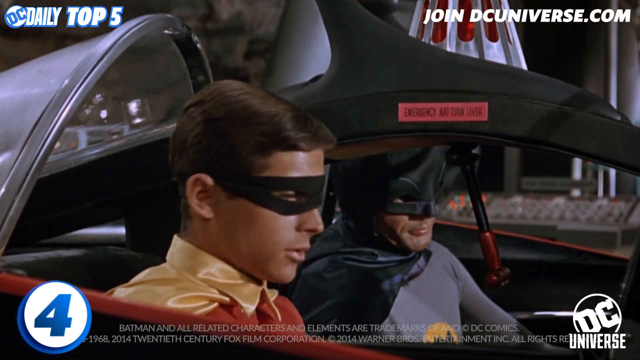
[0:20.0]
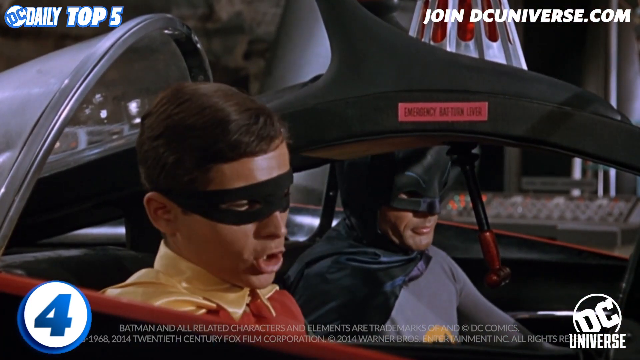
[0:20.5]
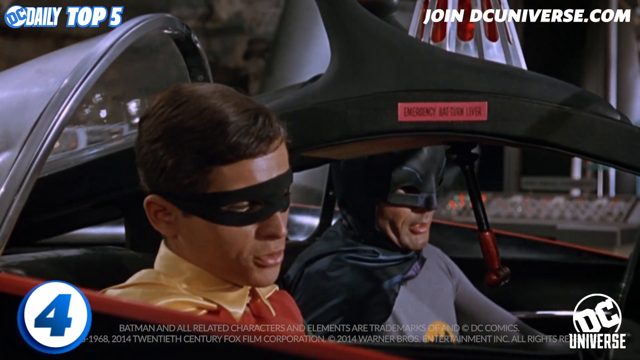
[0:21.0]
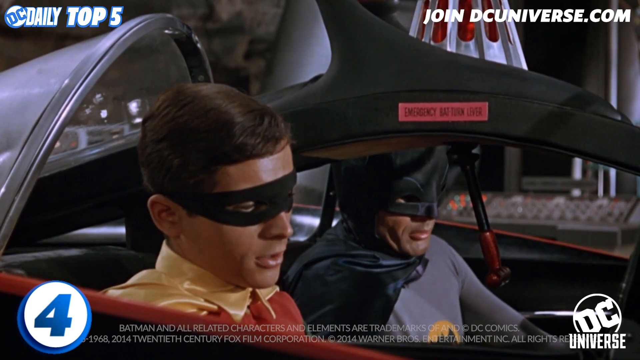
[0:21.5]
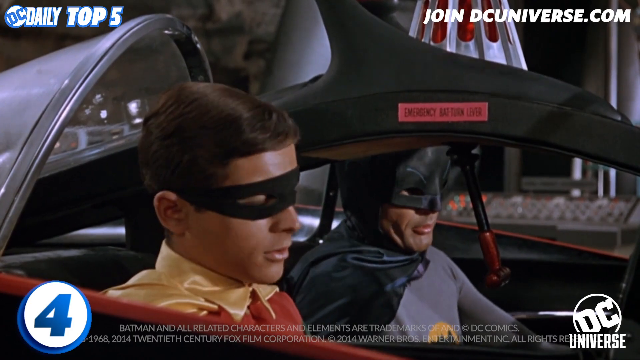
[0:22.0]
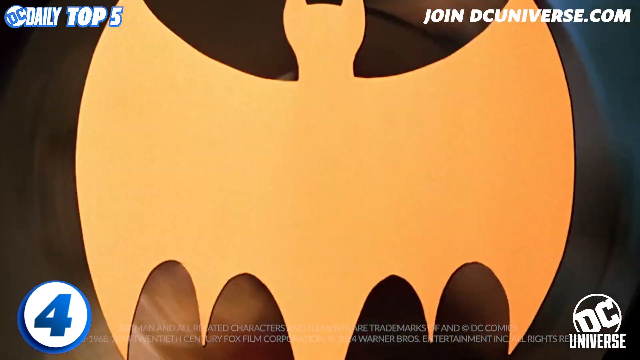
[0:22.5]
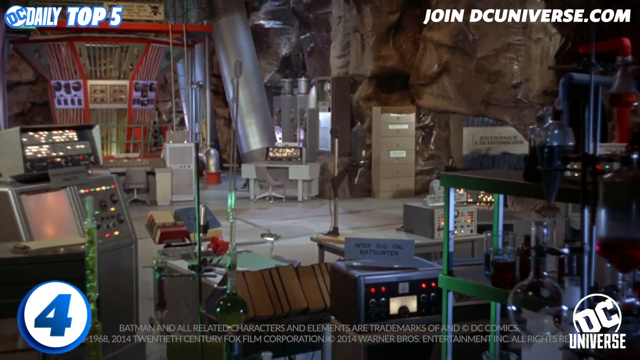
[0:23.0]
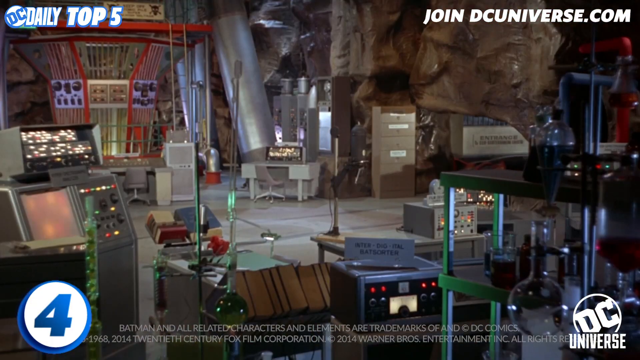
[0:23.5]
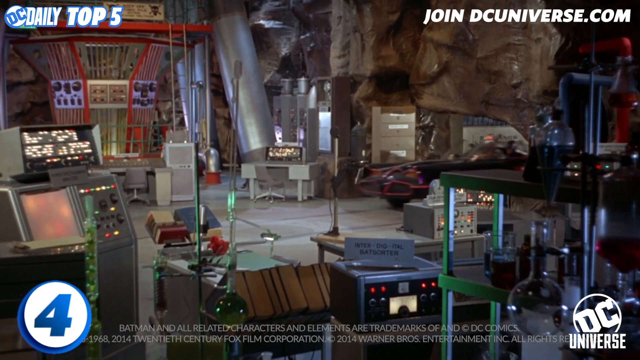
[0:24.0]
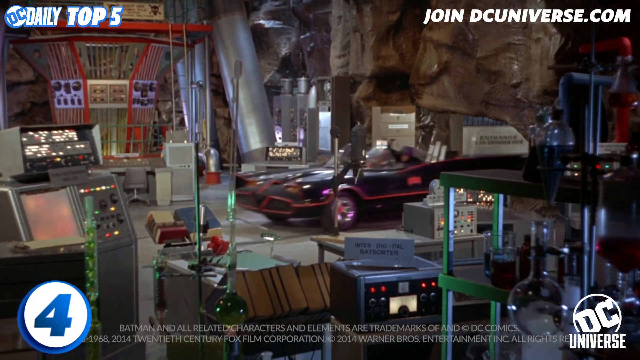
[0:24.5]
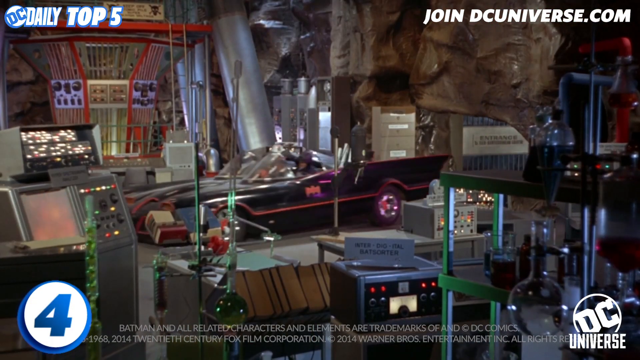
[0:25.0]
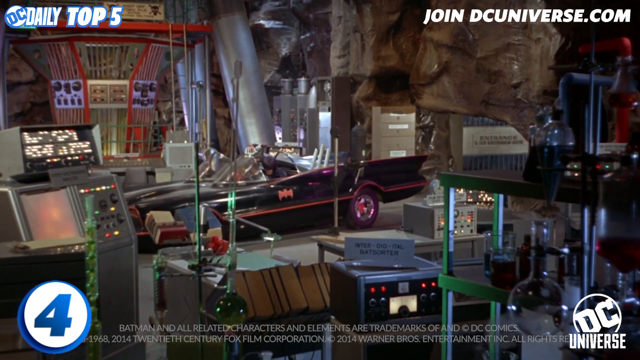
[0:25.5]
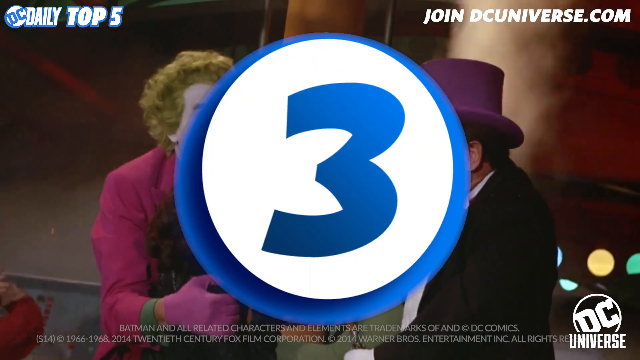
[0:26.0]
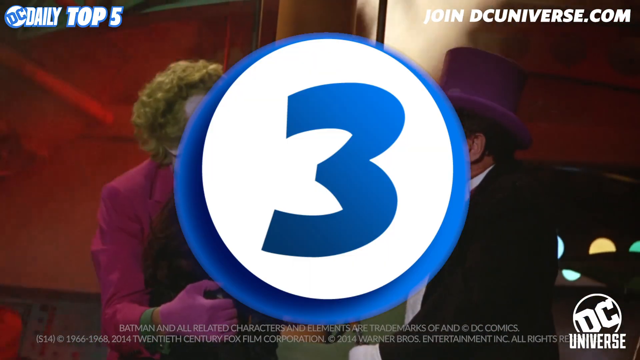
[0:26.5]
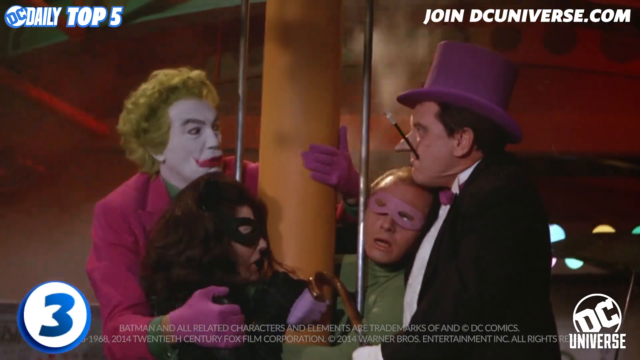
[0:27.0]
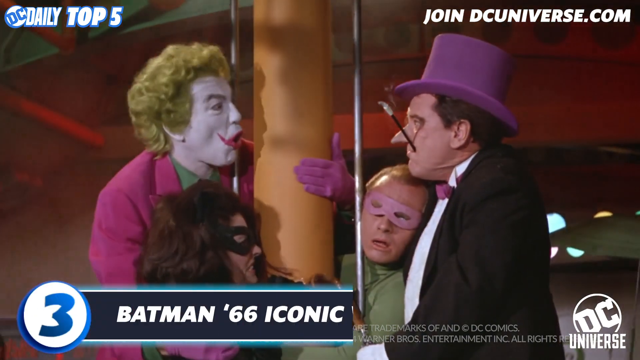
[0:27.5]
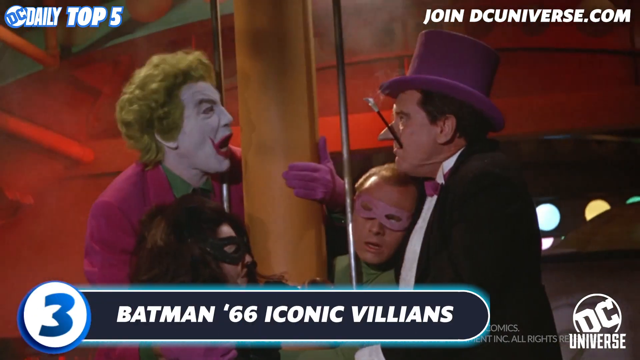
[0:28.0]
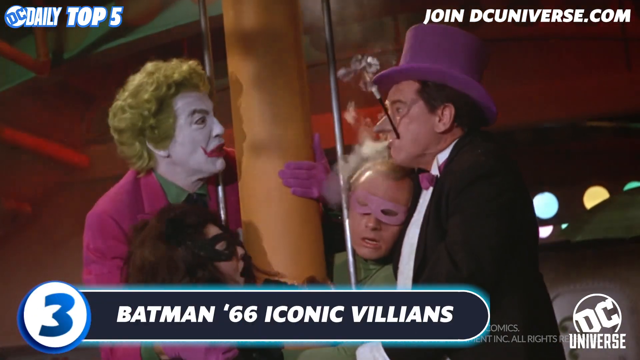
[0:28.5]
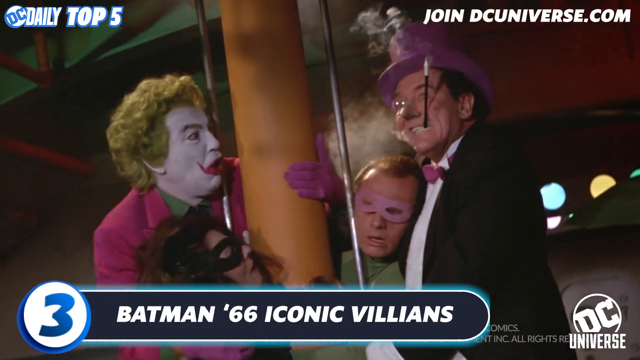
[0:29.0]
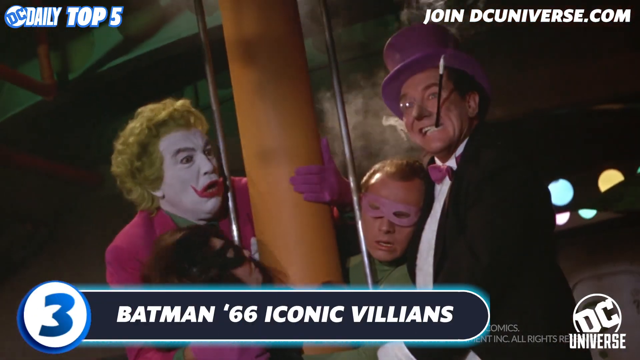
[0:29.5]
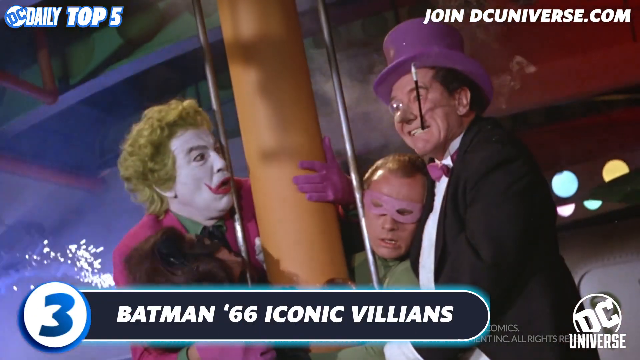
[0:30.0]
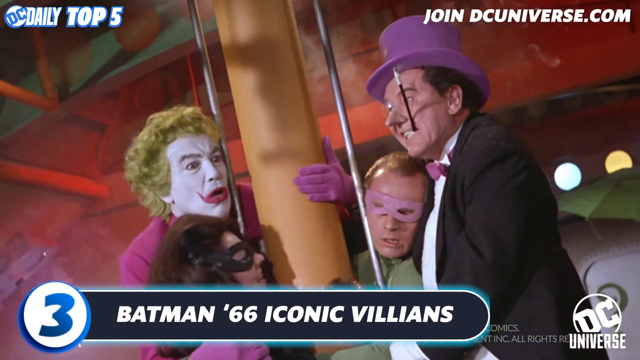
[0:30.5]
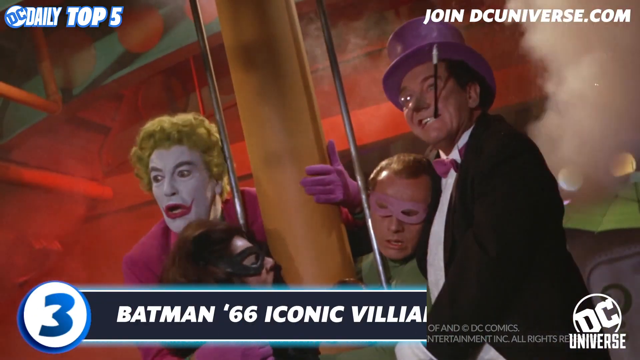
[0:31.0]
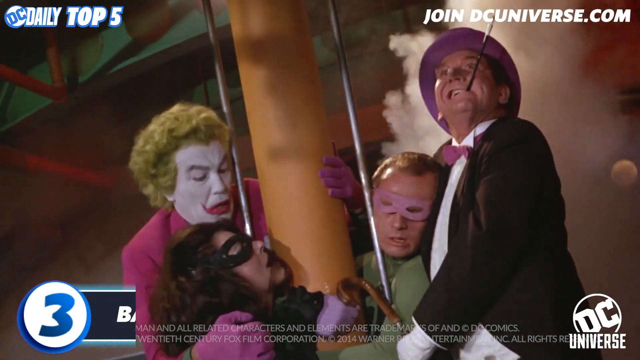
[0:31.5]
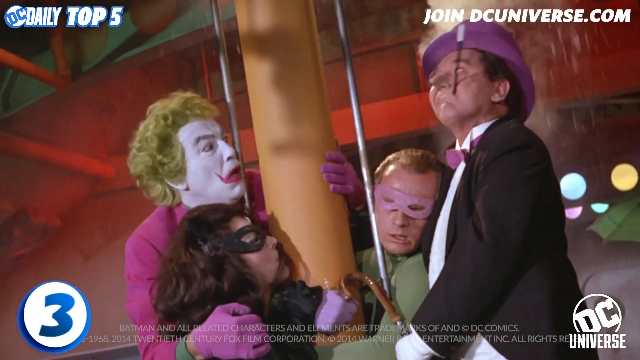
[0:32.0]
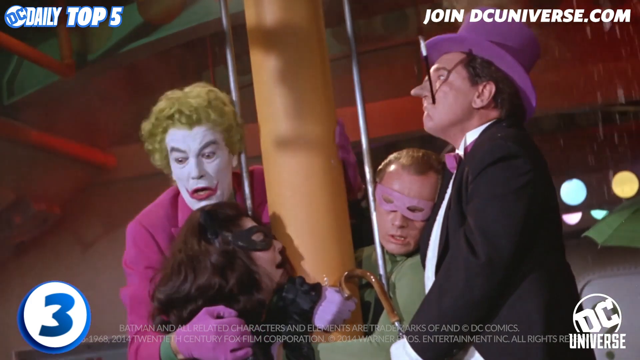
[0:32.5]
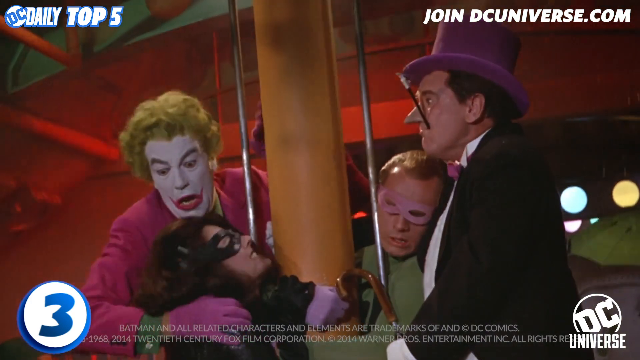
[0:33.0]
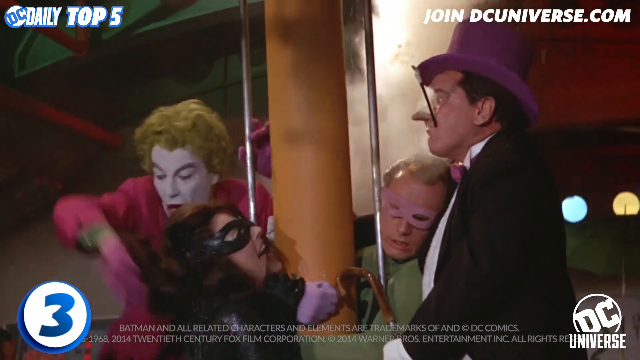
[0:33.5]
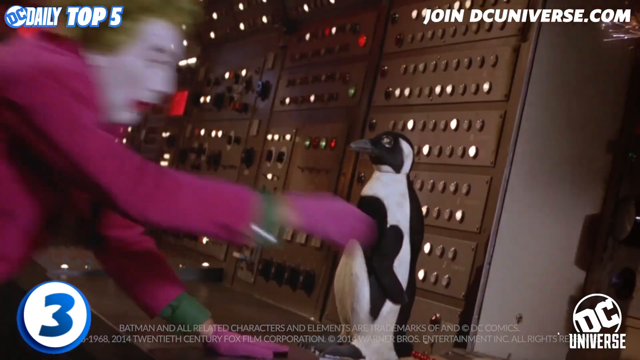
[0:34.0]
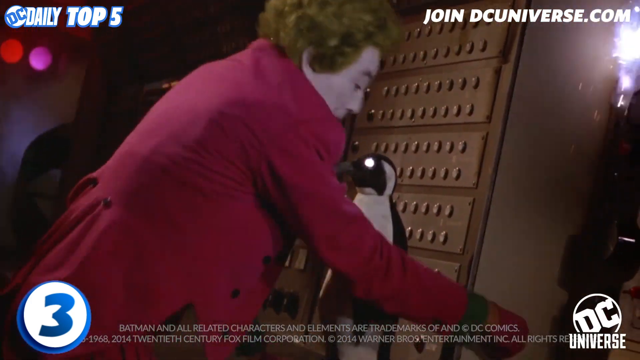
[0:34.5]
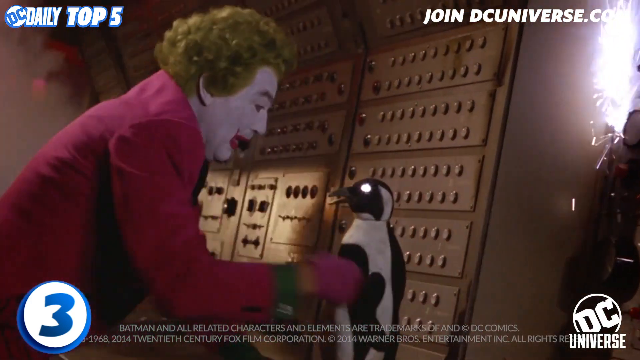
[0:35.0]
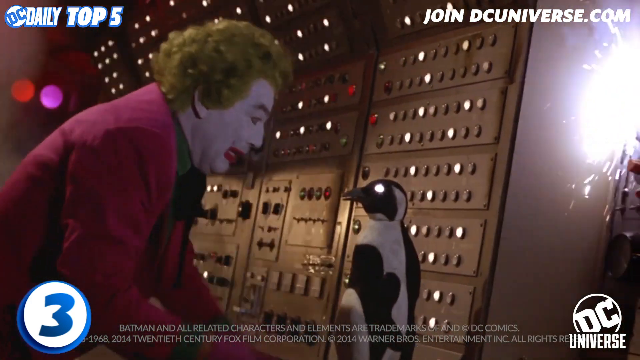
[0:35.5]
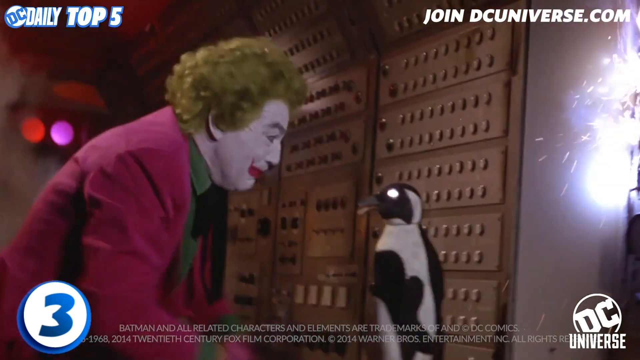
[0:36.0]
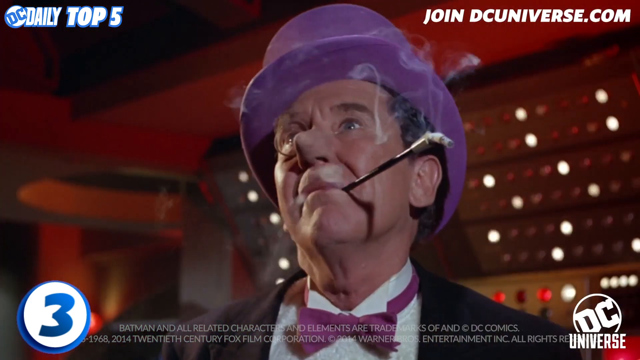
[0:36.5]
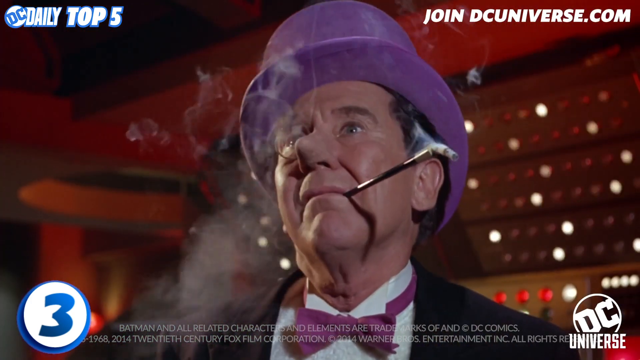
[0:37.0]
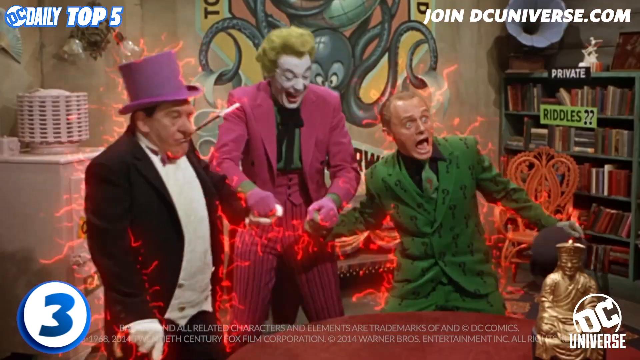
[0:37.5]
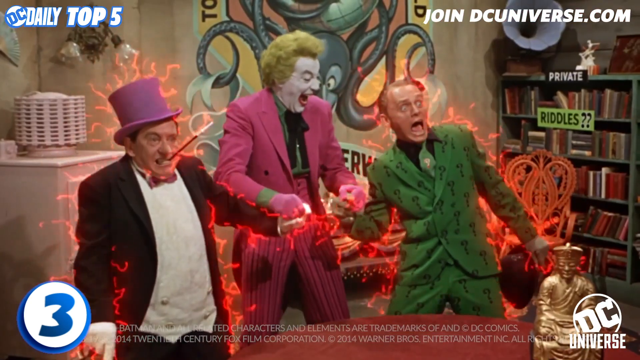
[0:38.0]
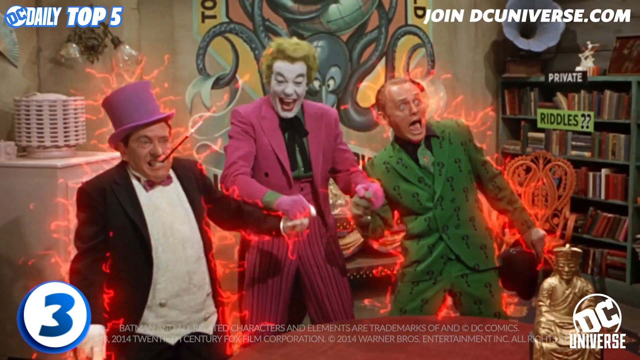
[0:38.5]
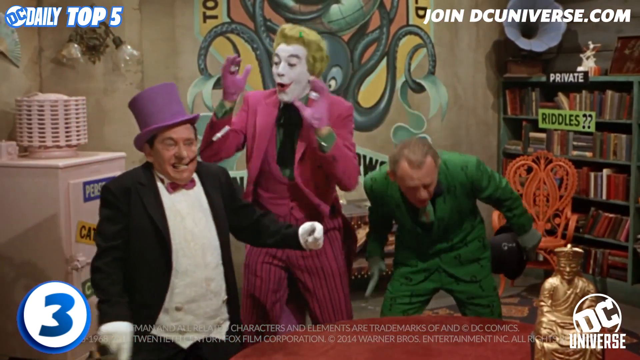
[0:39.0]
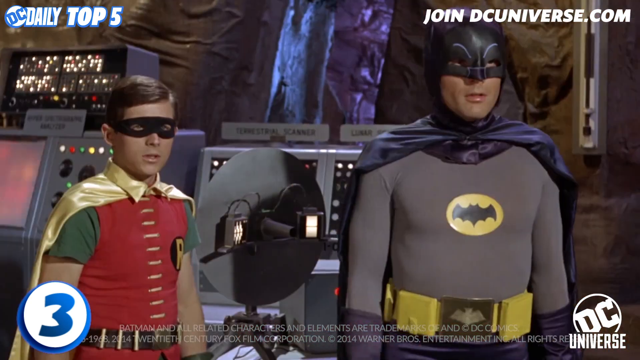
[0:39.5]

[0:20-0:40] The shot is zoomed in close on the car. A little black bar runs down the center above their heads, and there is a window on the back side. Robin is closest to the camera and a little to the left, while Batman is farther in and a little to the right. They talk to each other as a yellow Batman logo comes in the background, spinning in a circle. The video cuts to the inside of the Batcave, where the Batmobile comes in from the right side and screeches to a halt. A blue number three appears in the center on a white background with a blue border. The Joker stands on the left side facing right, with a girl down below him, just below his chin. On the right side, the Penguin faces the Joker, and the Riddler, in the bottom left, rests his head on the Penguin's chest. Text reads "Batman 66 iconic villains." The Penguin is smoking, the Joker looks frightened, and the Riddler is like half passed out; either the Joker or the Riddler is looking up in the air. The video cuts to the Joker coming in from the left and working at a control panel, with a mechanical penguin in front of him. The Penguin stares up and to the left, wearing a purple hat and holding a cigarette. Then all three are being electrocuted: the Joker is in the center with electrical buzzers in his hand, the Riddler is to the right, and the Penguin is to the left.